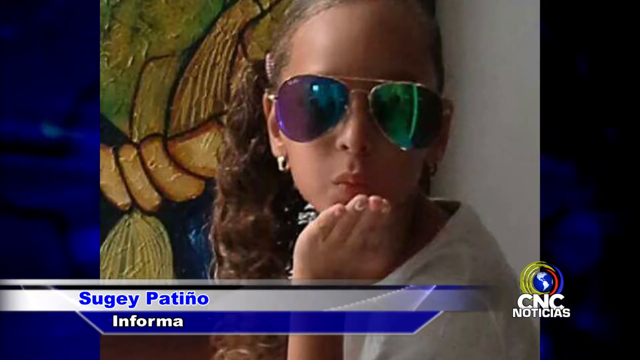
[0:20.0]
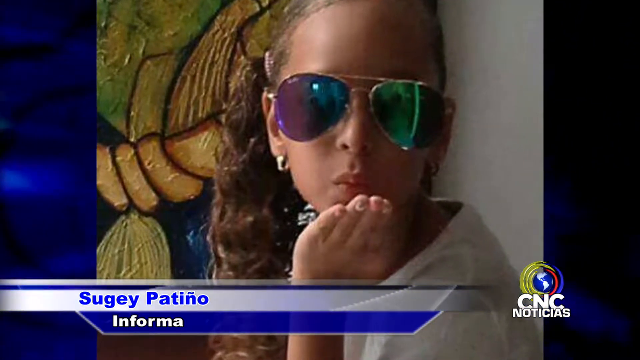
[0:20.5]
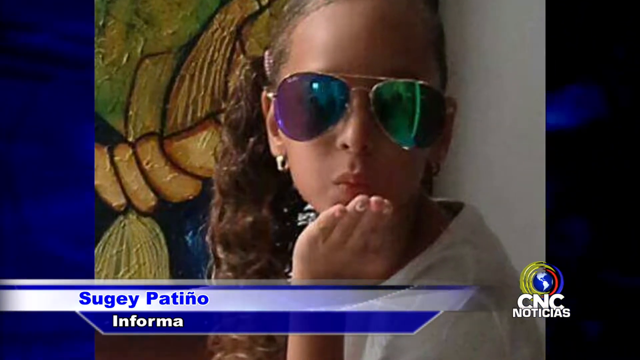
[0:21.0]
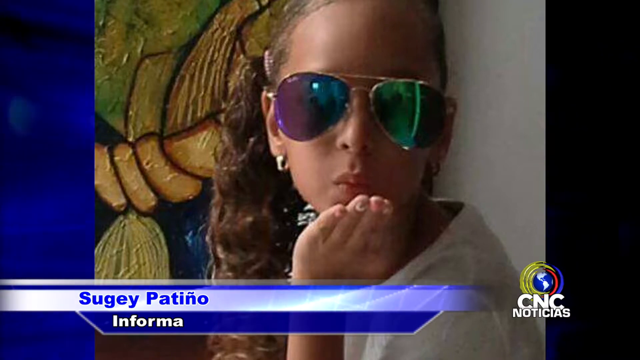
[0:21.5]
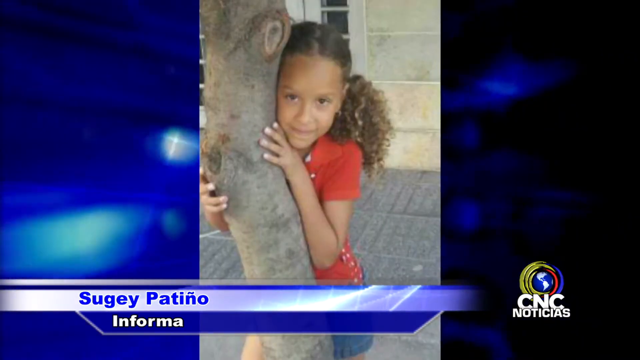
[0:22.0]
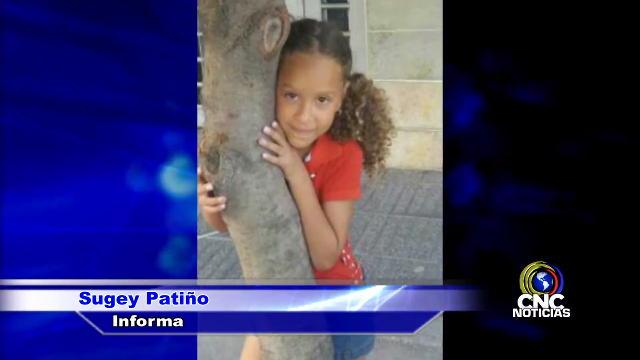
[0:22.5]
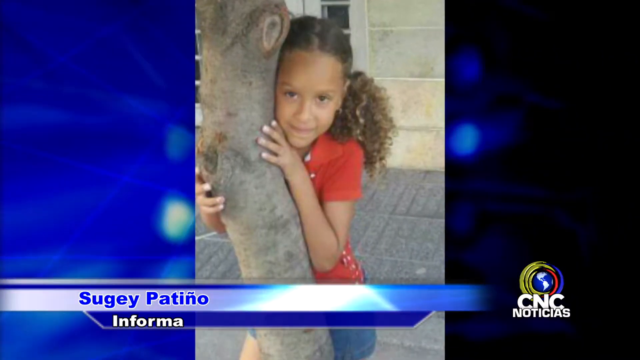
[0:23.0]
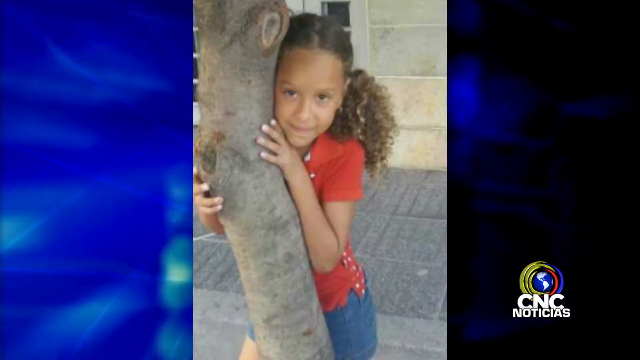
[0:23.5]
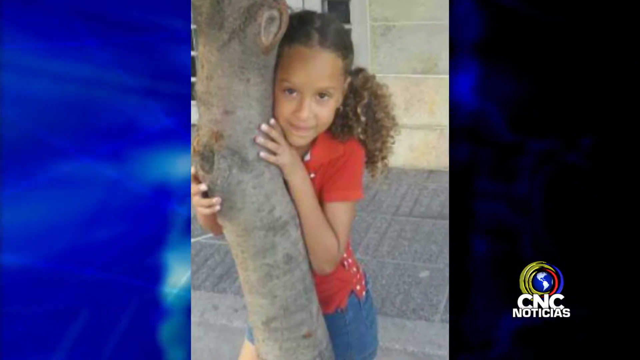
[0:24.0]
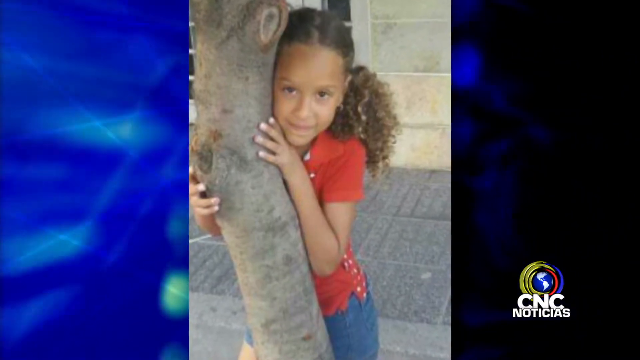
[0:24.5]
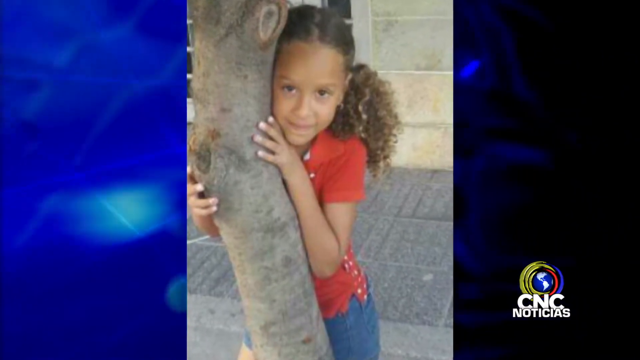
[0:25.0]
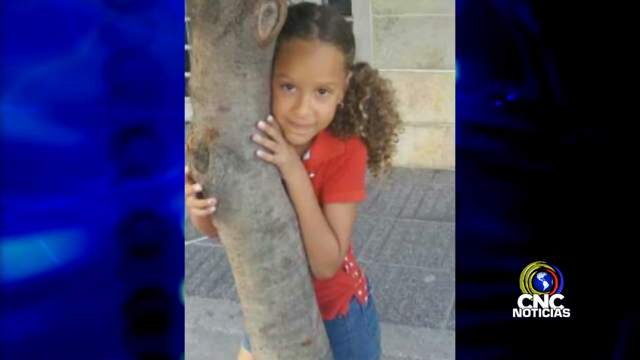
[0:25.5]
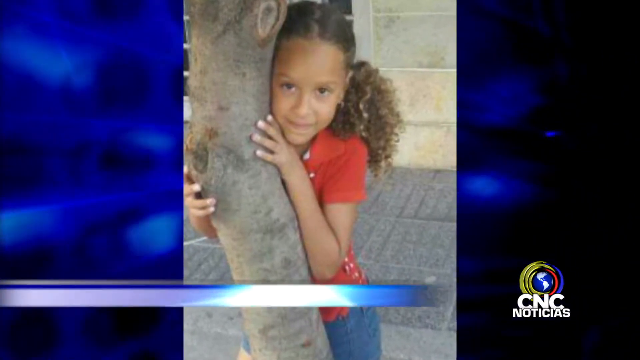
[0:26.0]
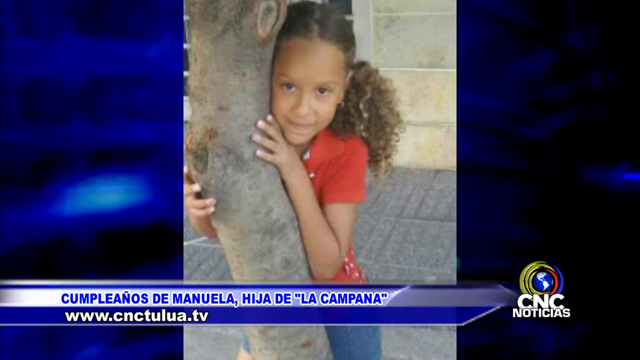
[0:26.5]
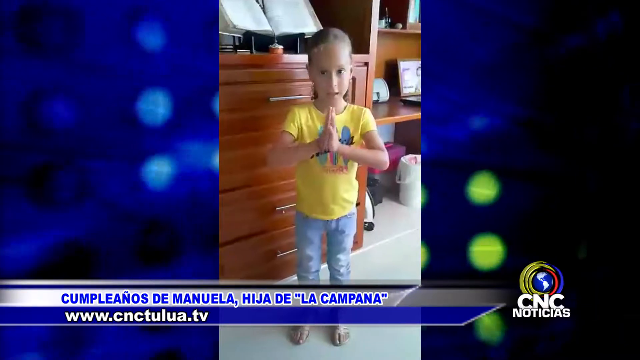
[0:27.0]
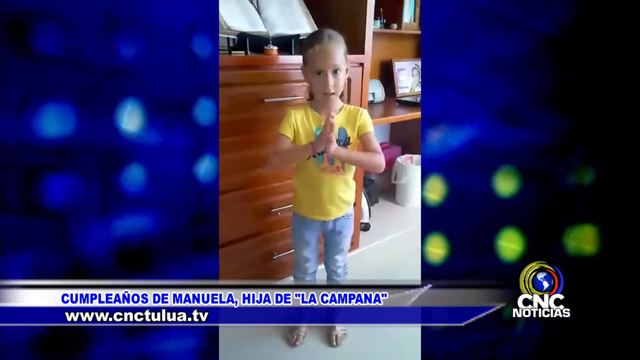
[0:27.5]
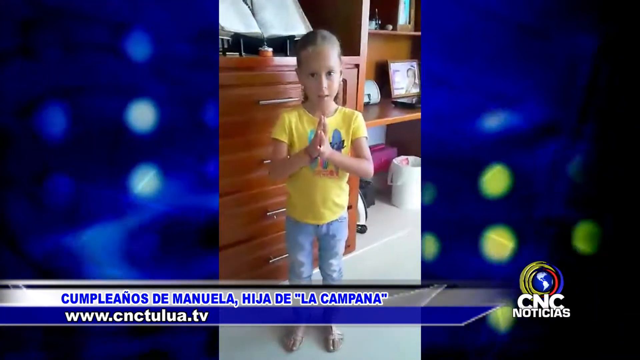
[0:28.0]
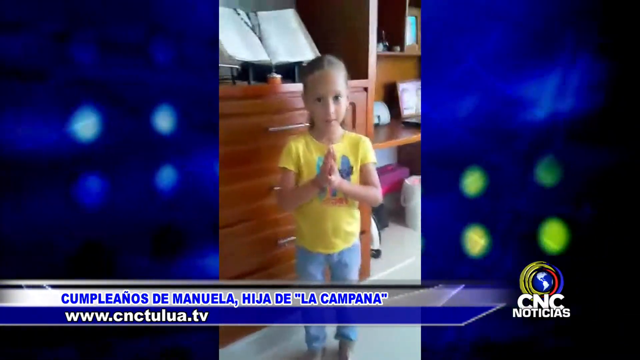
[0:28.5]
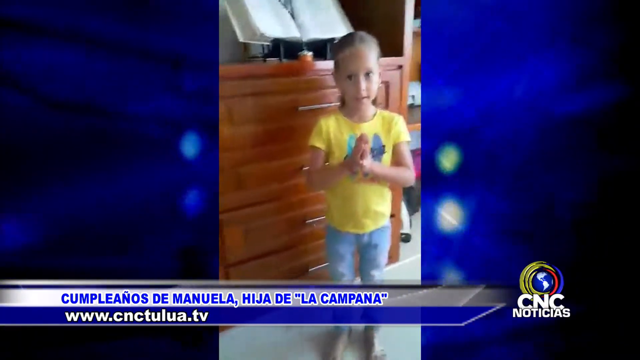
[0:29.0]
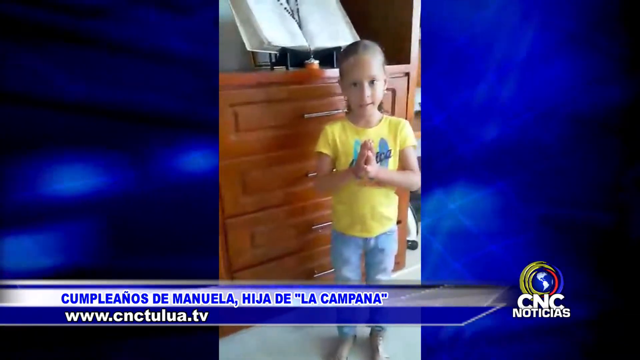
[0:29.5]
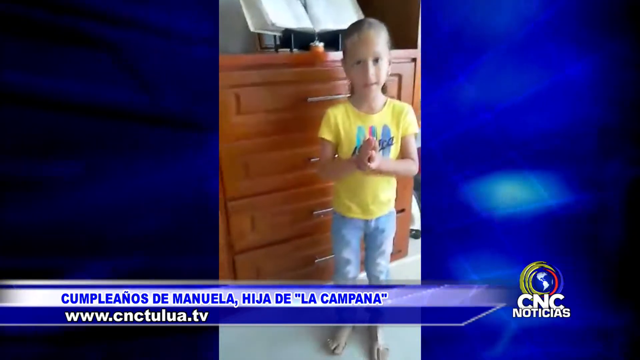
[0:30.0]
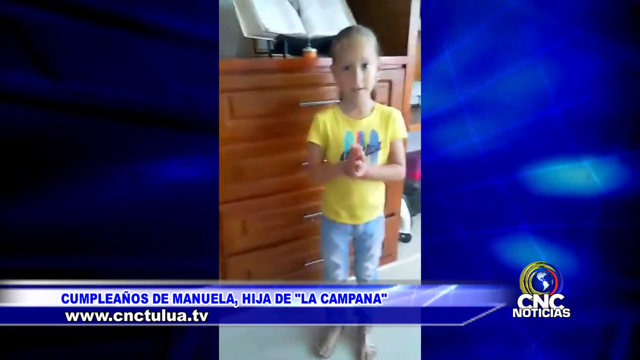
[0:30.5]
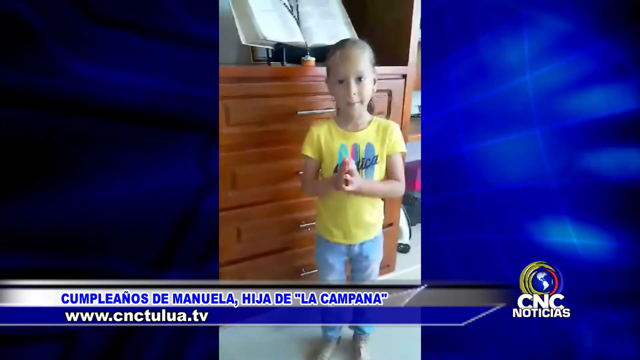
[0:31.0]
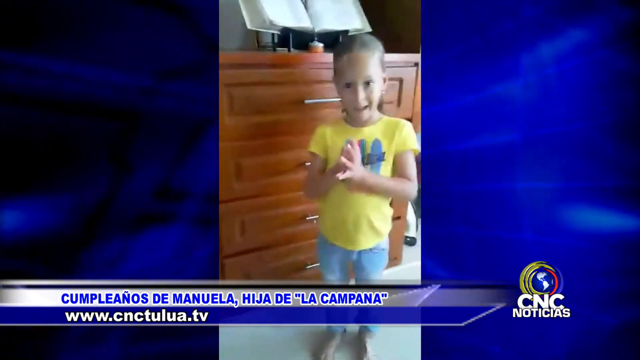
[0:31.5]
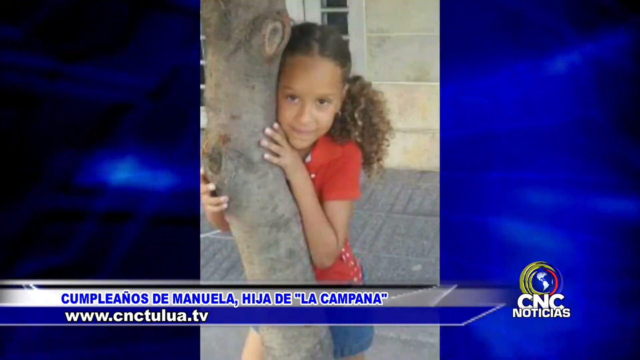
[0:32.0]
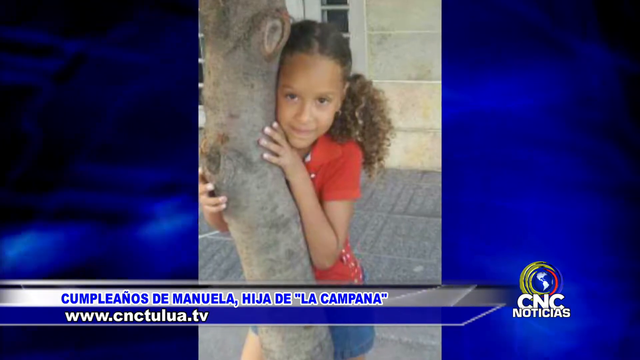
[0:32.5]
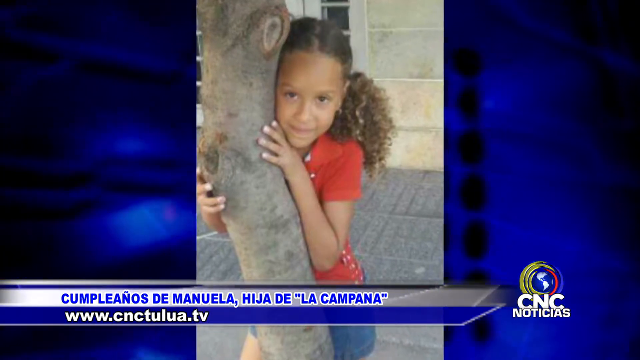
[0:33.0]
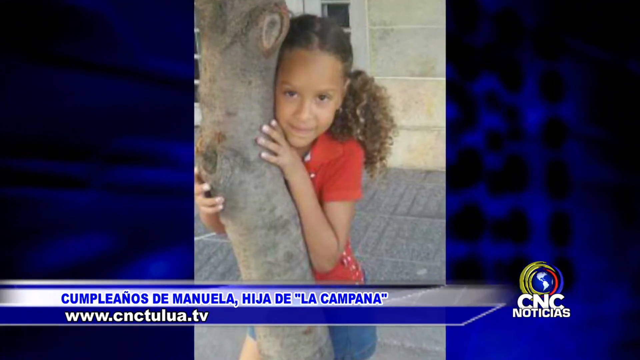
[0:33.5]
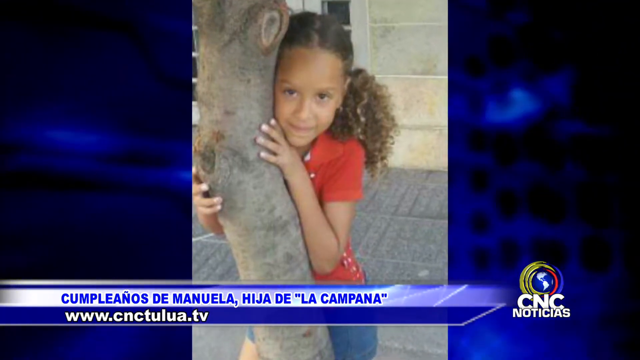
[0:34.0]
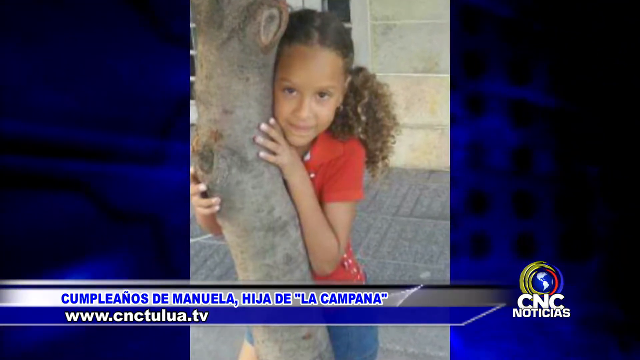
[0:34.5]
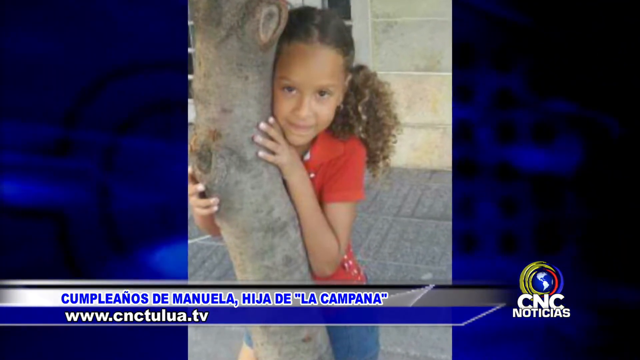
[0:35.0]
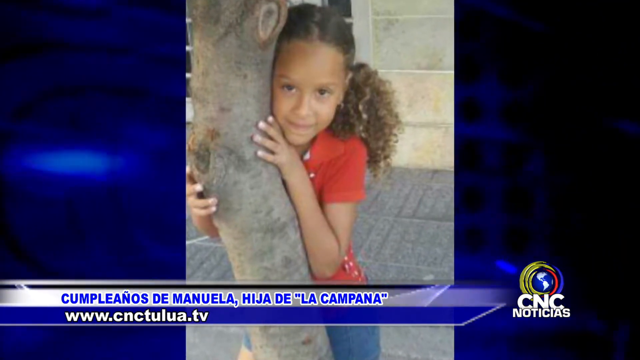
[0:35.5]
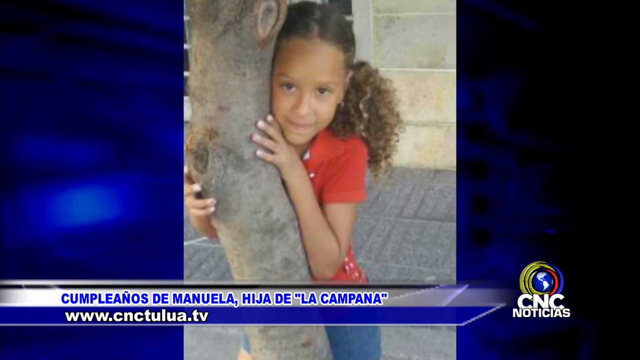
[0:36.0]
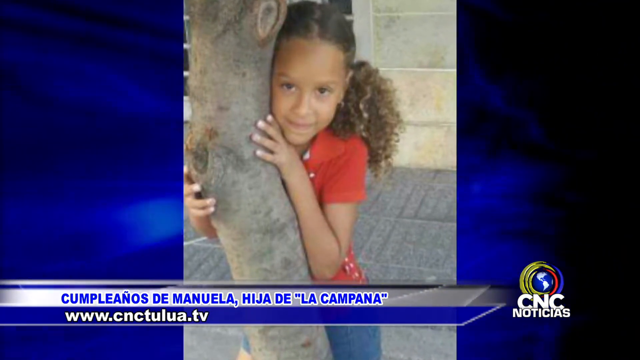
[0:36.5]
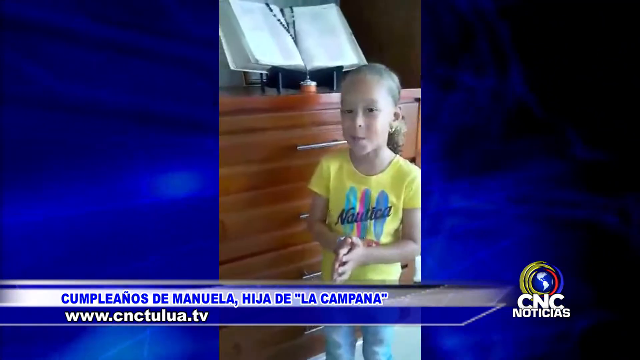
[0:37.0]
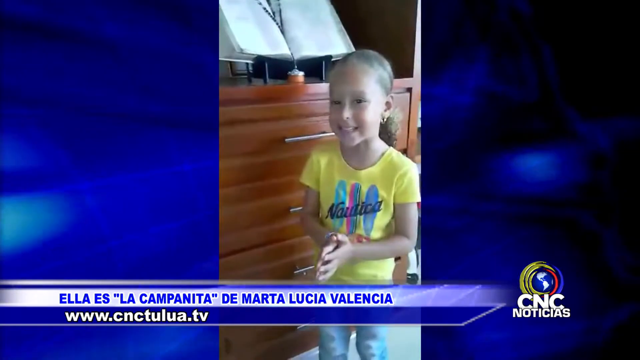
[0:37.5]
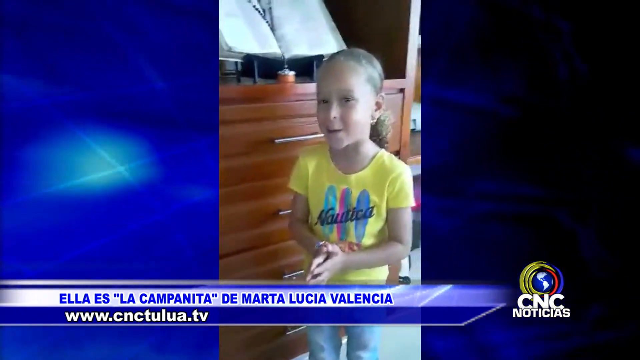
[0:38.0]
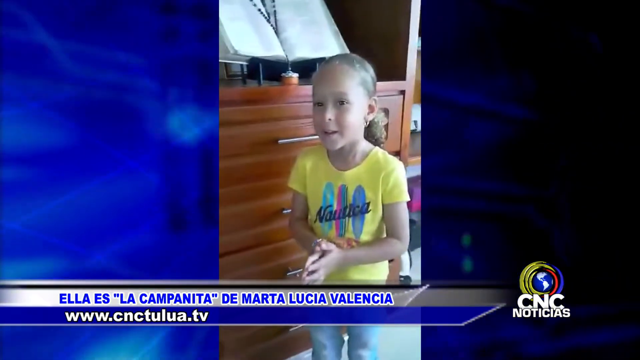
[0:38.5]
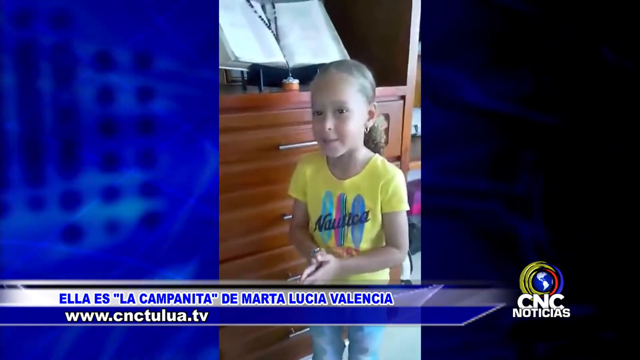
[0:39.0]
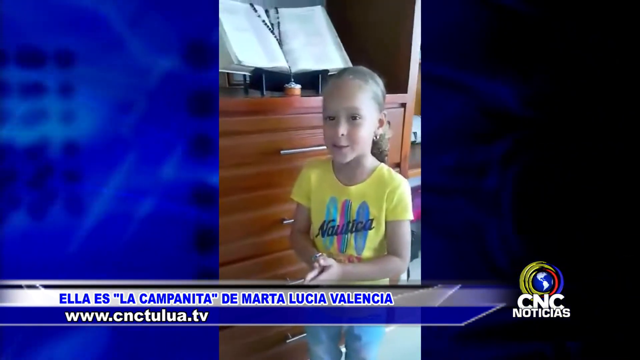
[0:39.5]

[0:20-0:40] An image shows a little girl, her name displayed as "Sugey Patino". She wears aviator-shaped sunglasses, and her hair is swept sideways with some loose curls hanging down across her shoulder. She is seen from the head to the shoulders. She appears to be blowing a kiss, and her sunglasses reflect lights that look like someone's cell phone. Behind her, a colourful motif is on the left side. Another image shows the girl in a red top holding onto a slender tree trunk and peeking out with her head beside it, a slight smile on her face, as the camera pans slightly closer. The girl then appears in video footage, standing with her hands clasped together as if in prayer and her eyes open. She wears a yellow T-shirt and blue denim pants, and behind her is a wood-coloured chest of drawers. The camera pans slightly closer, and she has a slight smile on her face. Across the bottom of the screen is a text transcription of the words spoken in the video.